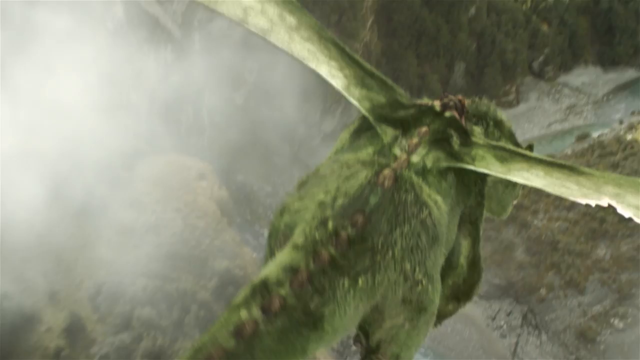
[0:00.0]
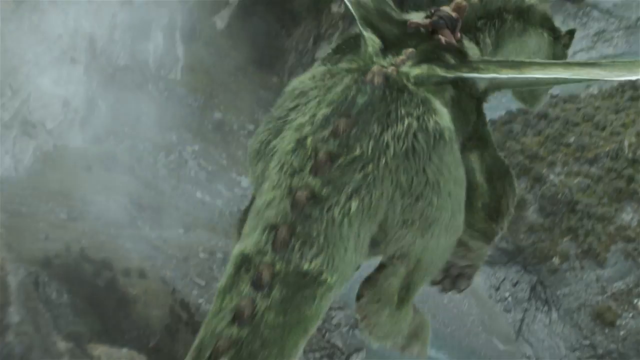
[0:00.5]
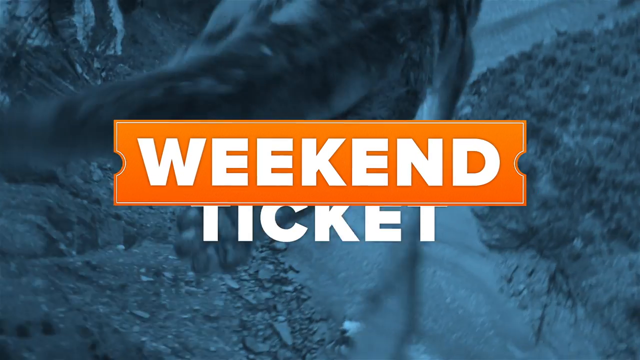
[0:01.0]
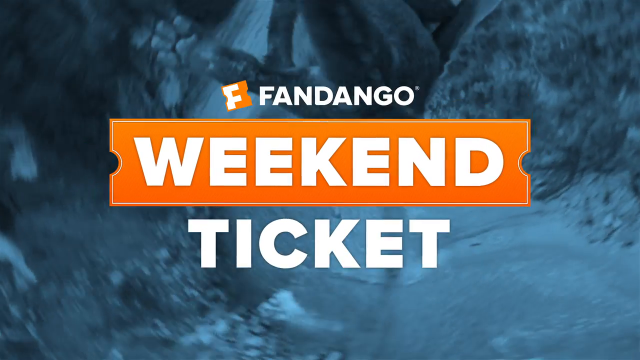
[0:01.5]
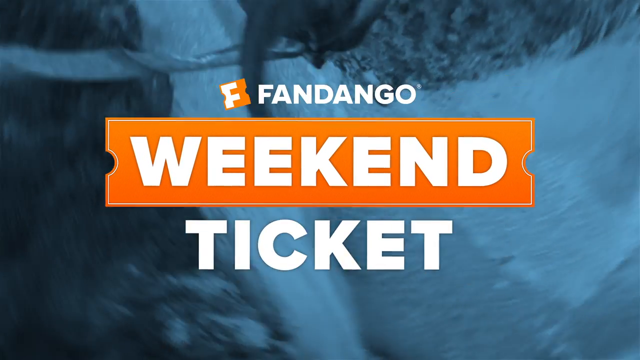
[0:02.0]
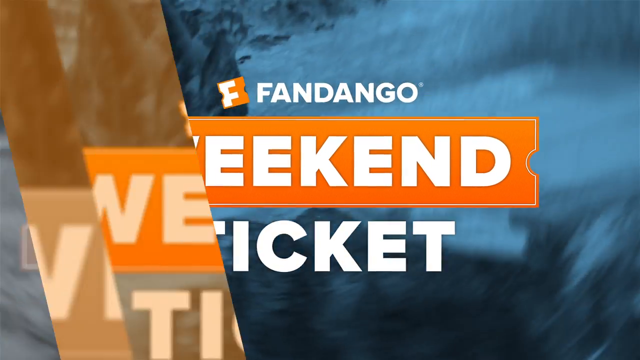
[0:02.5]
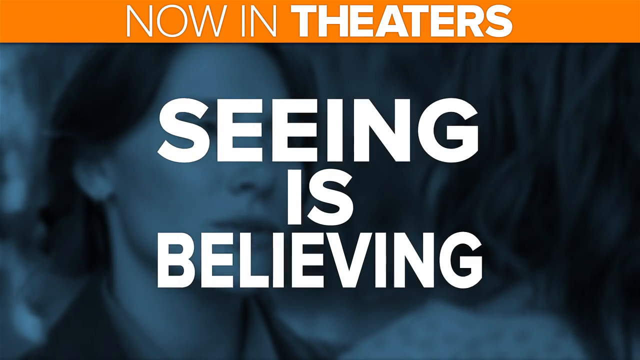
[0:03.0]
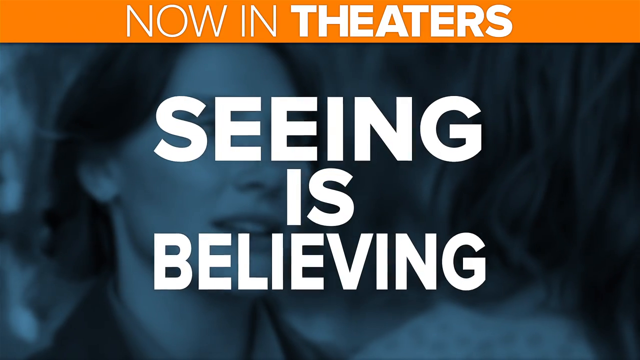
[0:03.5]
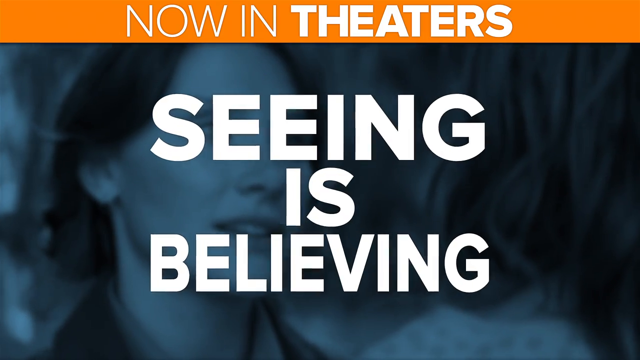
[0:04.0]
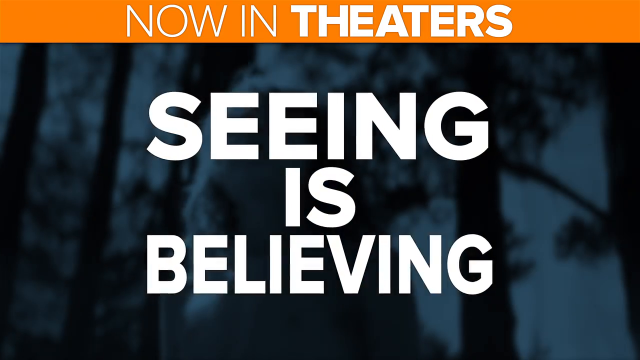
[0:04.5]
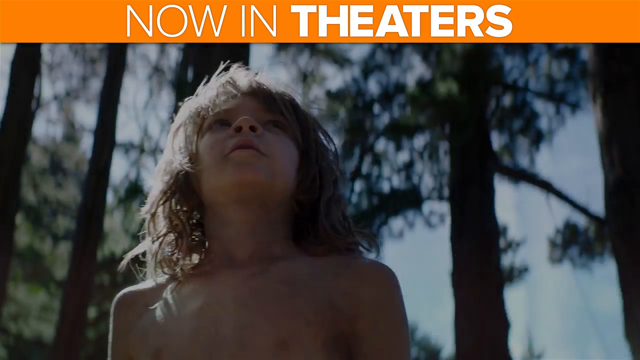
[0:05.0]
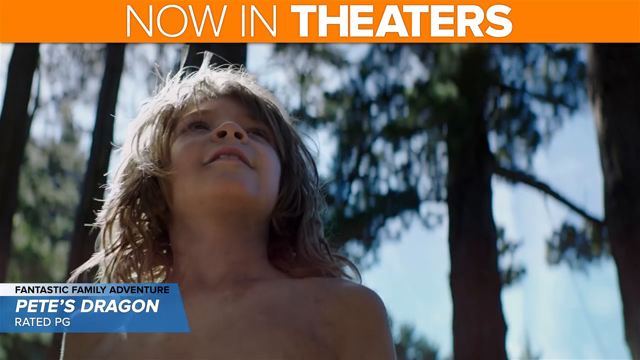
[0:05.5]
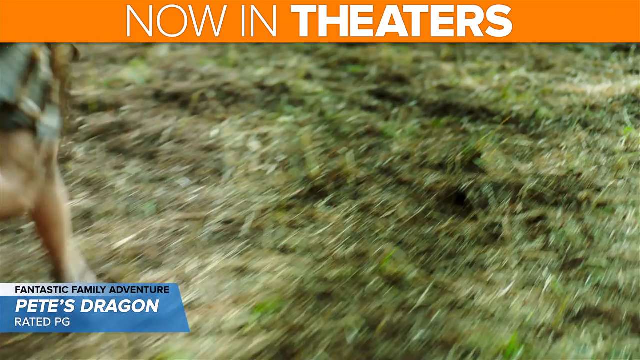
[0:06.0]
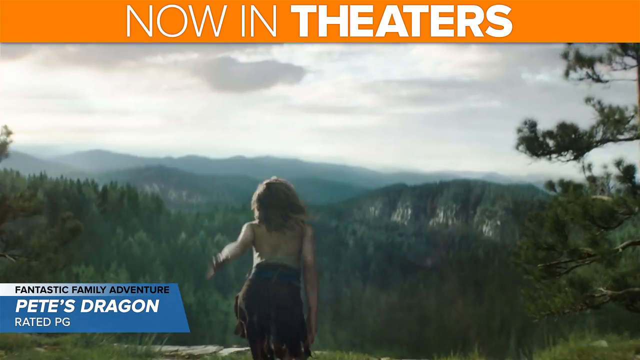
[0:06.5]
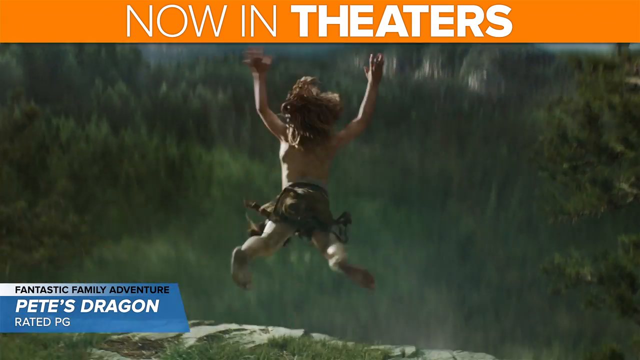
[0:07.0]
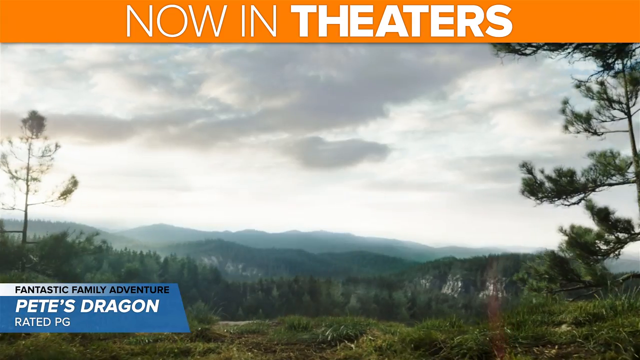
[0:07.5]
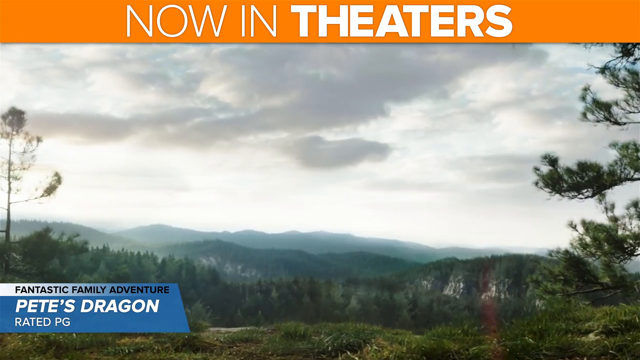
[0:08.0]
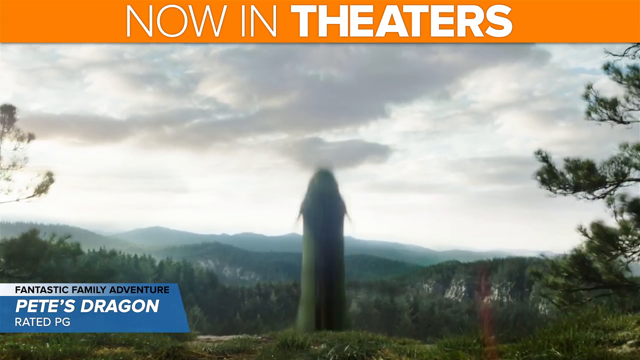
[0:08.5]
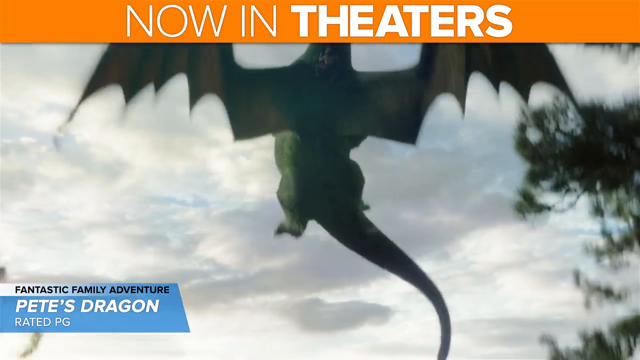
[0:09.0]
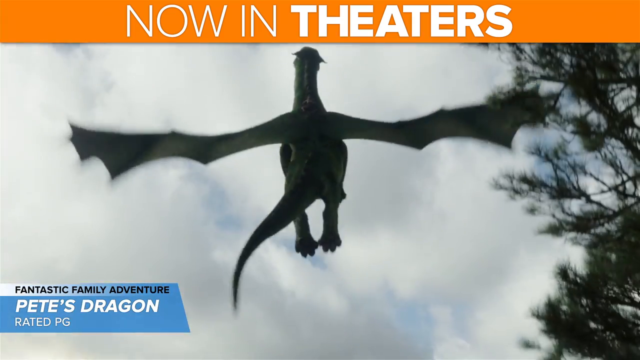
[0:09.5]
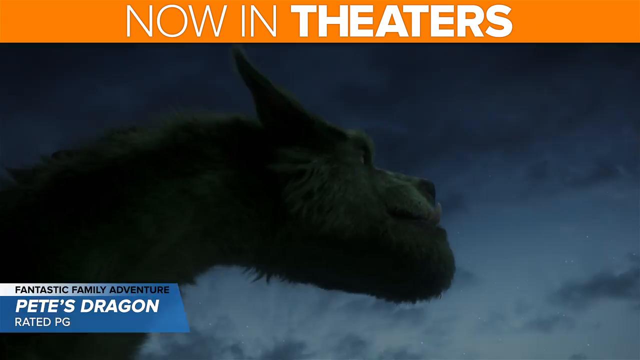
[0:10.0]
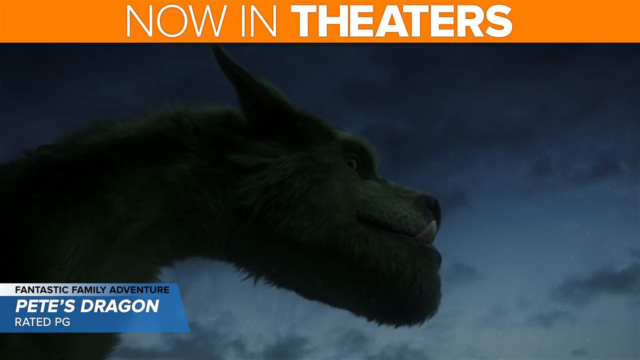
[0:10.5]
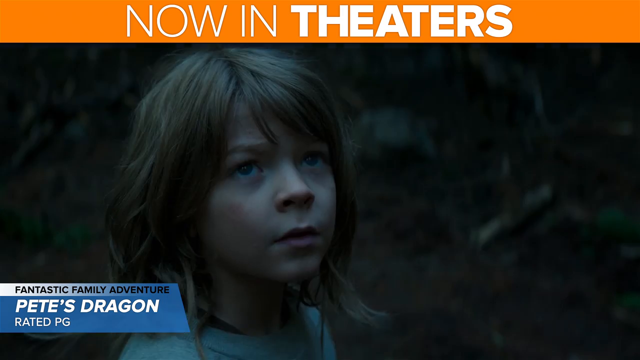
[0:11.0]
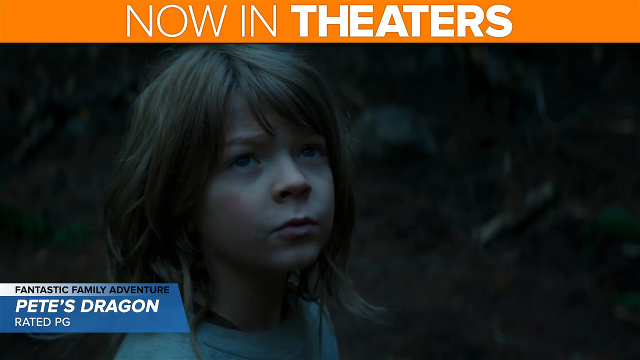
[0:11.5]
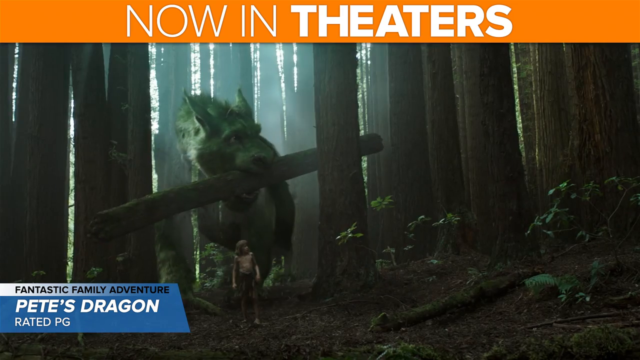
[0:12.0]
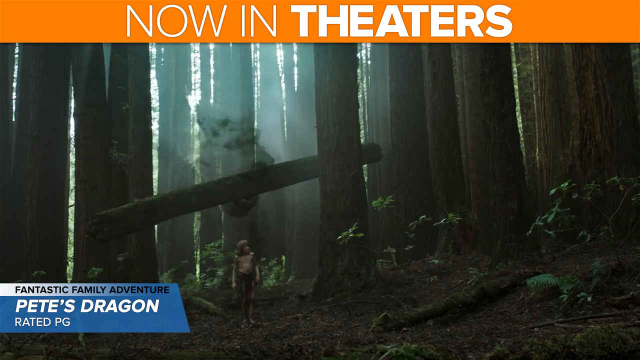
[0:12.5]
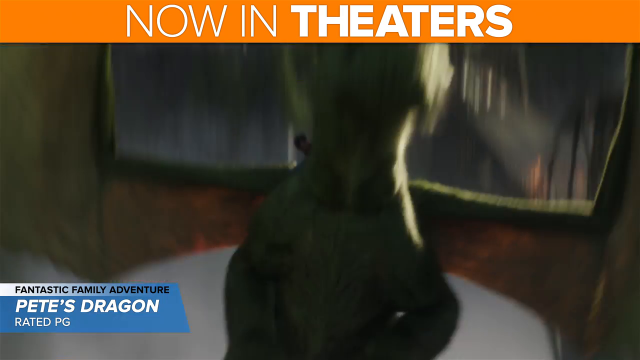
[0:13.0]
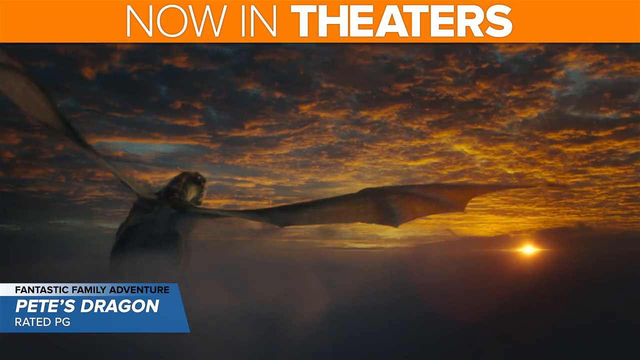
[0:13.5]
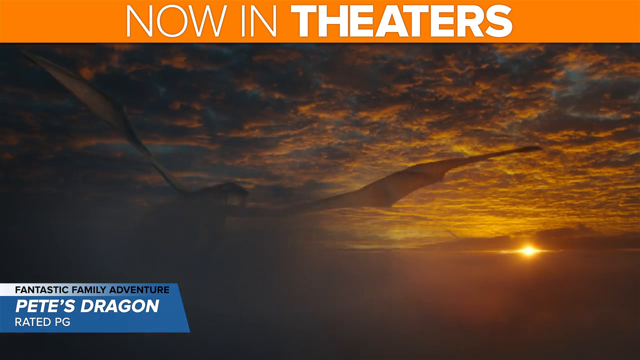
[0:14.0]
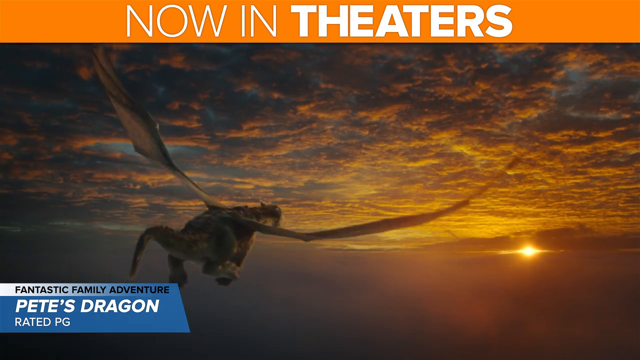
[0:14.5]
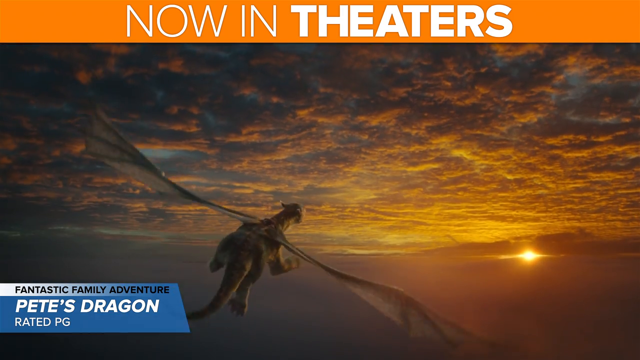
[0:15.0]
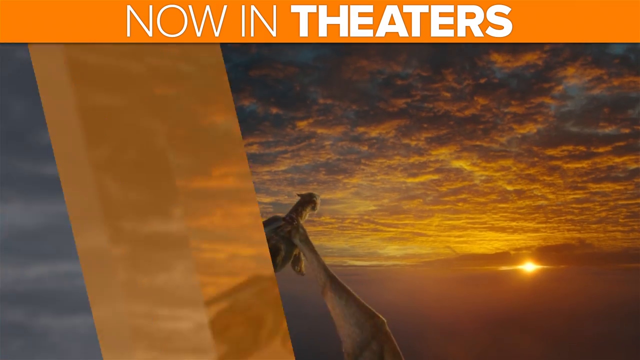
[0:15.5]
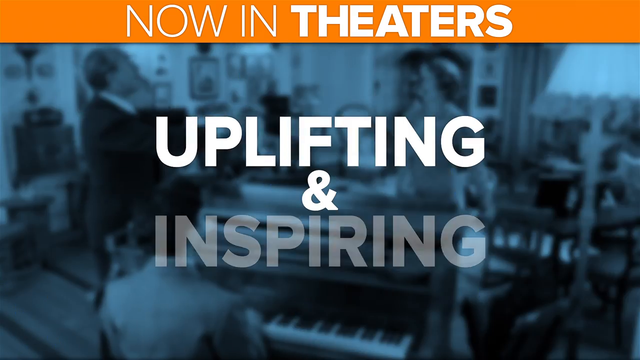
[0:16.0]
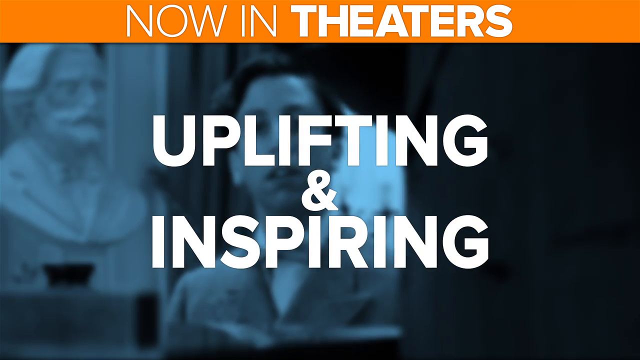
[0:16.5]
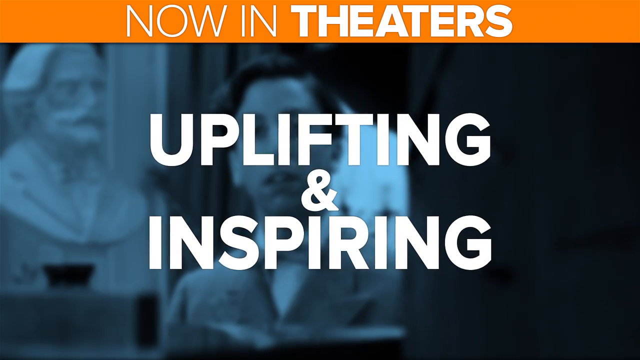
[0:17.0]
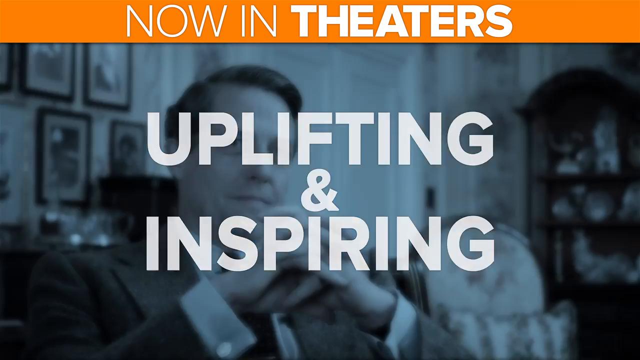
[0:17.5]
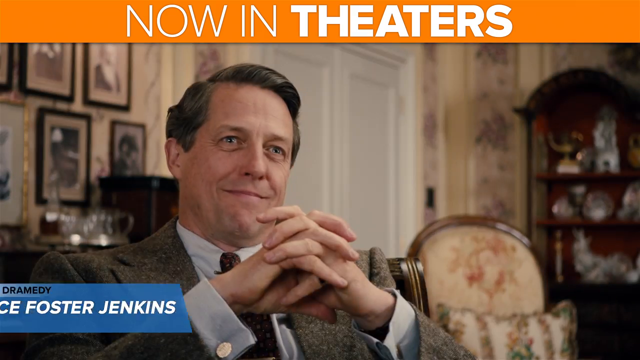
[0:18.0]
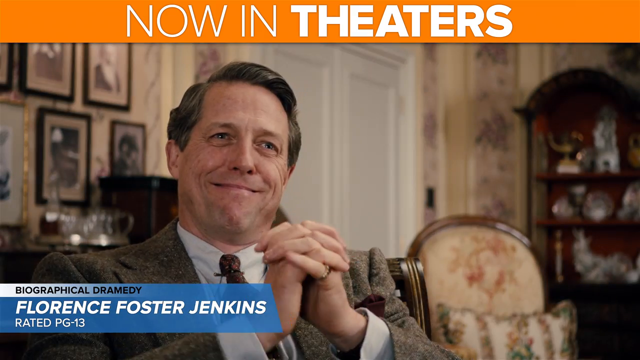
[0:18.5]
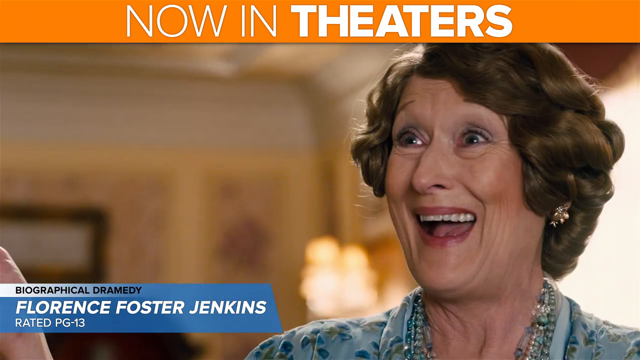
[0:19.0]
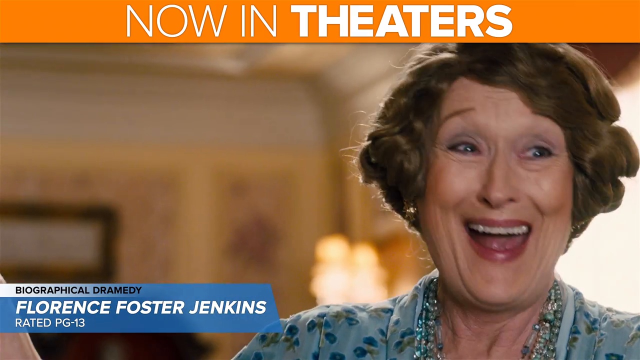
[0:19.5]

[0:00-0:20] A message appears on screen reading "and now in theaters, seeing is believing," followed by "Pete's Dragon." It looks like a movie that has started showing in cinemas. A young boy appears, and it is unclear whether he turns into a dragon or rides the dragon. A dragon flies away. The young boy seems to be staying in some kind of forest, and there is an animal around that forest. The forest looks dangerous, and the dragon itself looks scary, though the boy and the dragon apparently are friends, or perhaps understand each other or are connected; possibly the boy is the one who turns into the dragon. Next, a man and an old woman appear, and she is laughing.